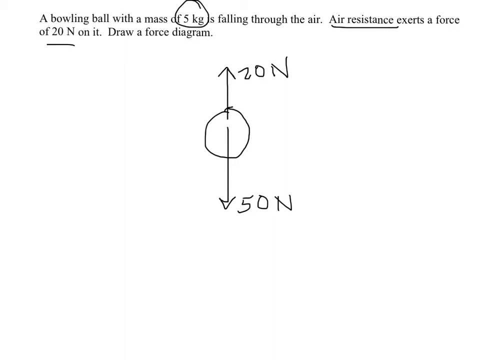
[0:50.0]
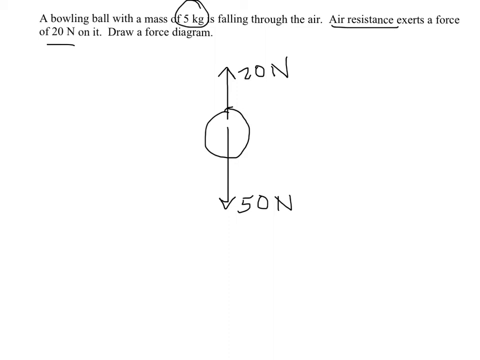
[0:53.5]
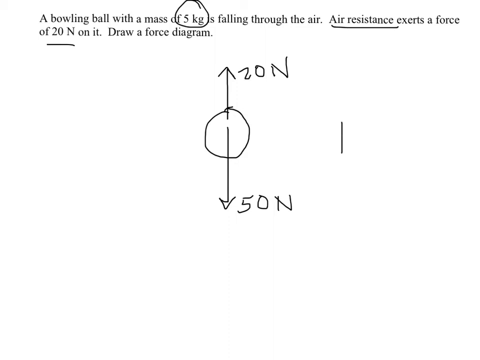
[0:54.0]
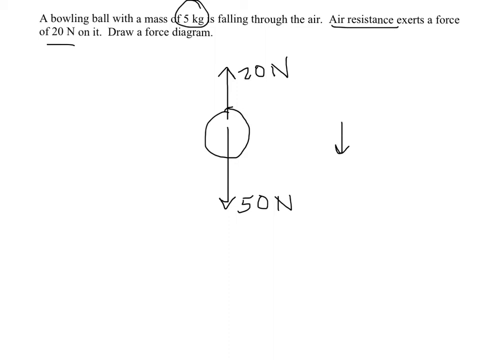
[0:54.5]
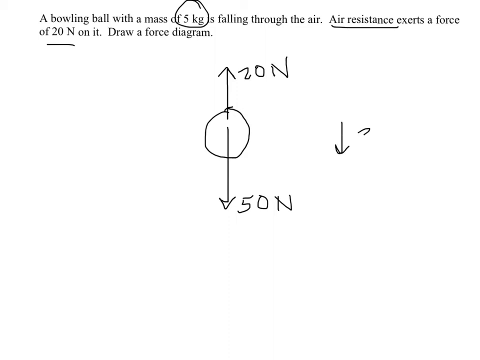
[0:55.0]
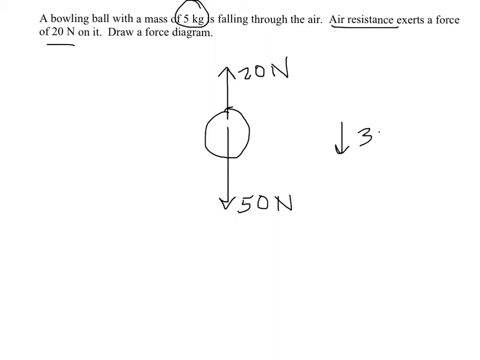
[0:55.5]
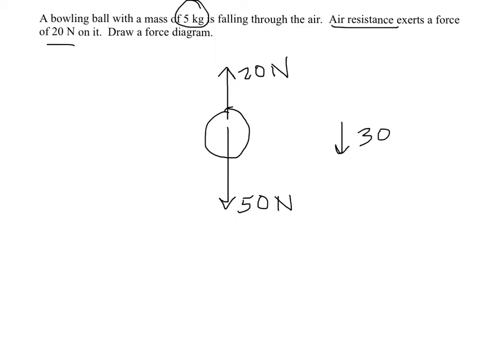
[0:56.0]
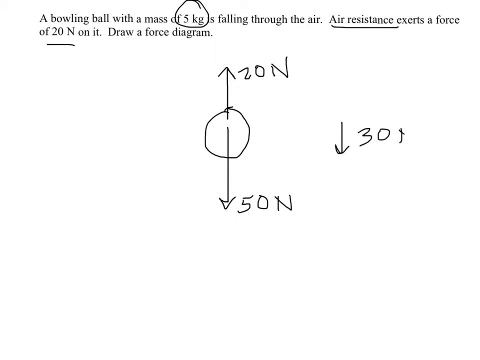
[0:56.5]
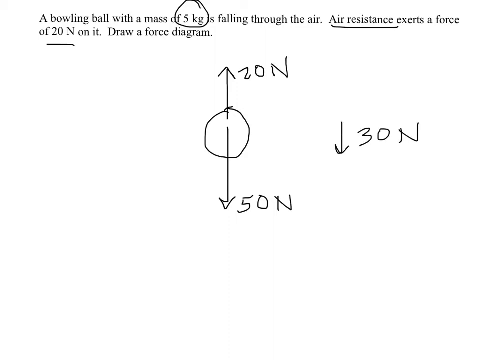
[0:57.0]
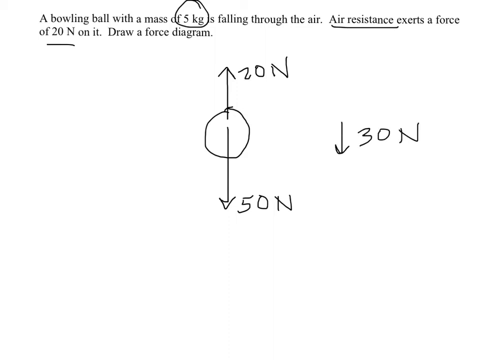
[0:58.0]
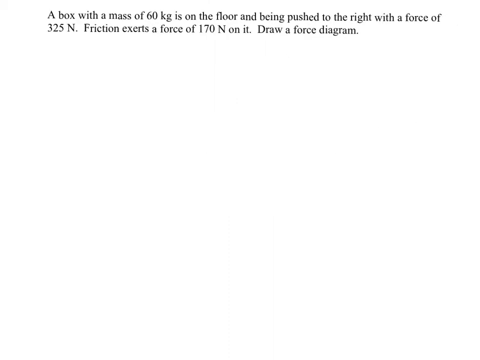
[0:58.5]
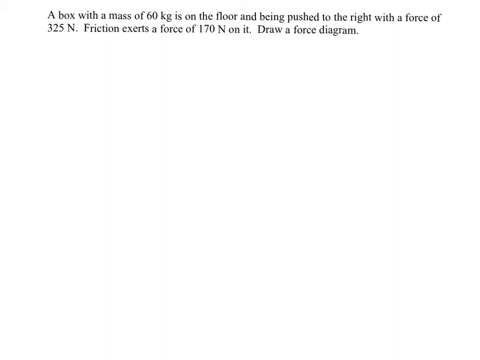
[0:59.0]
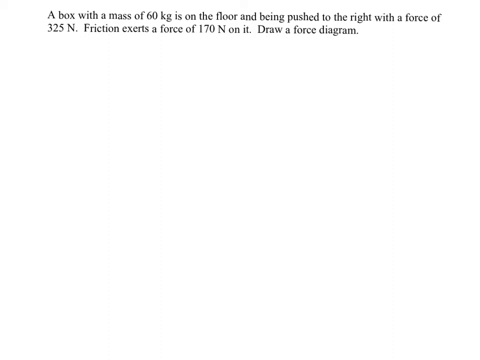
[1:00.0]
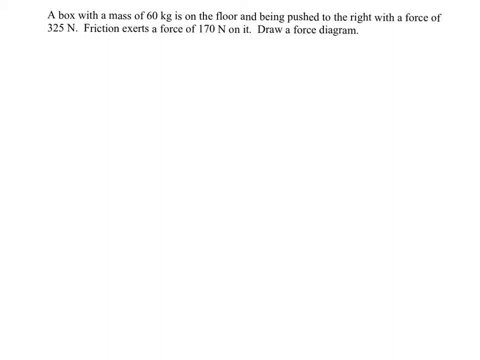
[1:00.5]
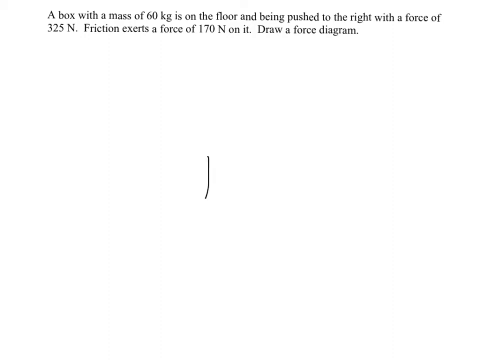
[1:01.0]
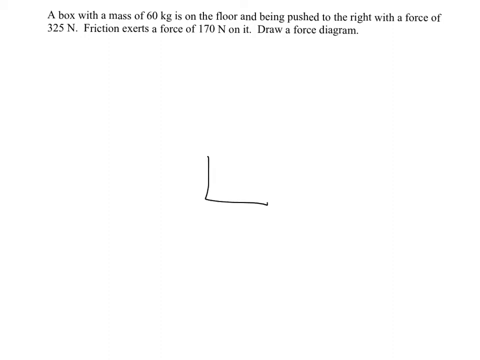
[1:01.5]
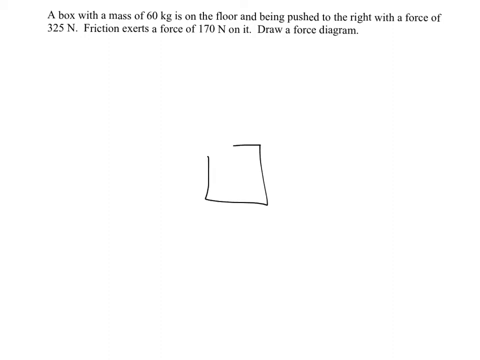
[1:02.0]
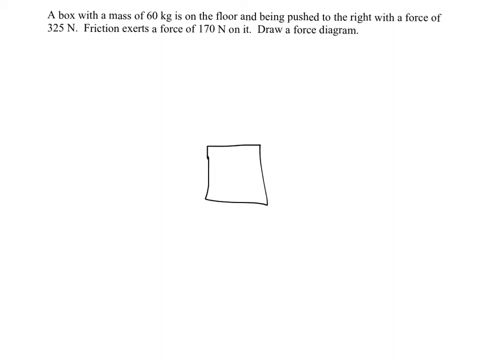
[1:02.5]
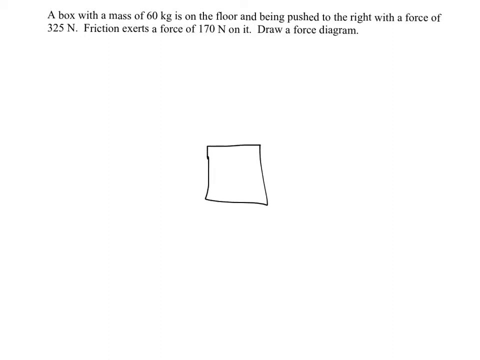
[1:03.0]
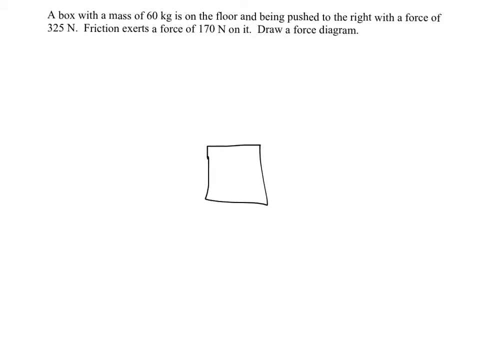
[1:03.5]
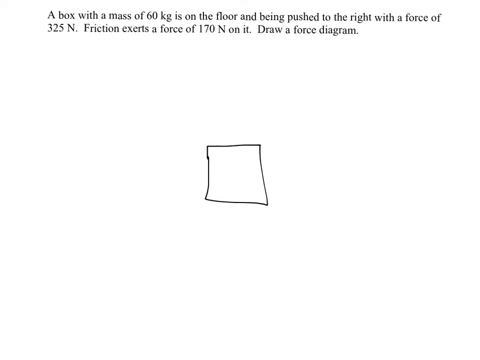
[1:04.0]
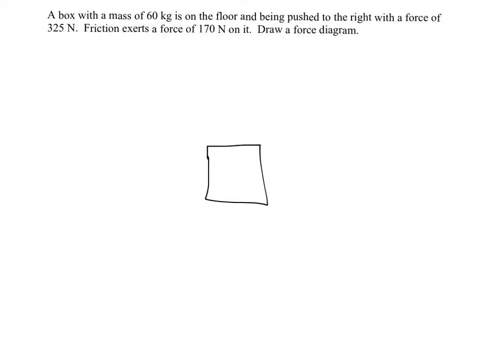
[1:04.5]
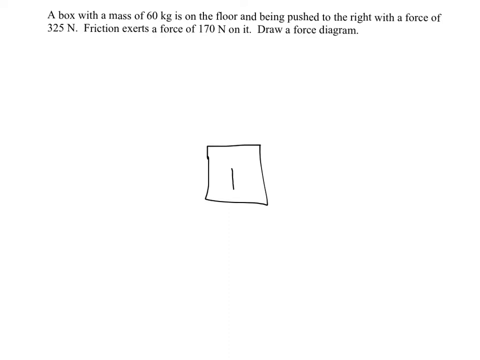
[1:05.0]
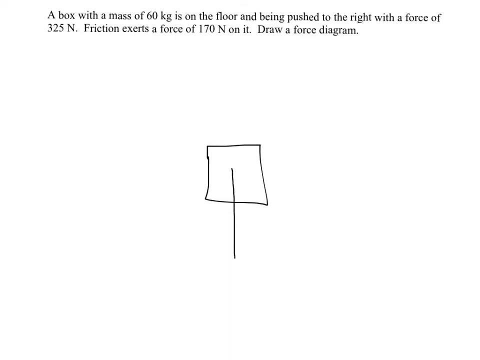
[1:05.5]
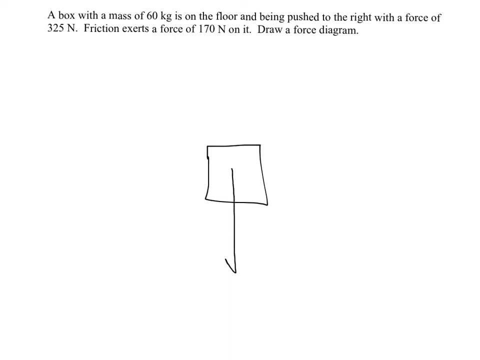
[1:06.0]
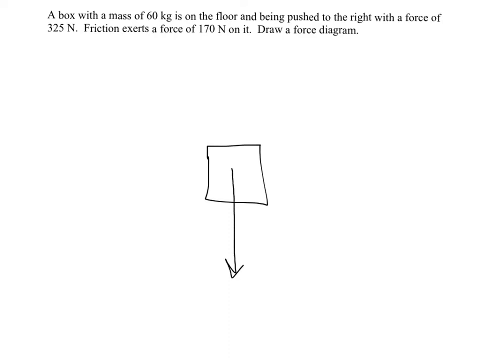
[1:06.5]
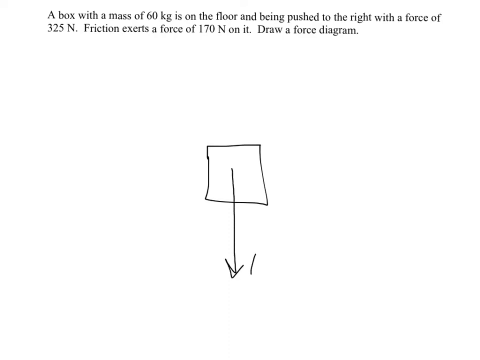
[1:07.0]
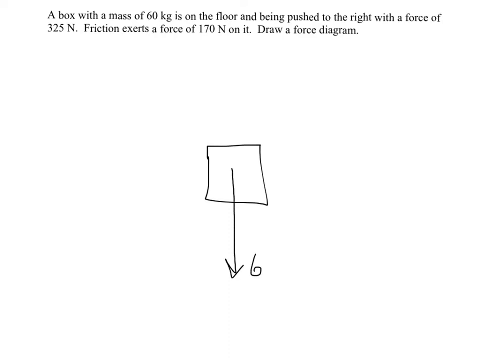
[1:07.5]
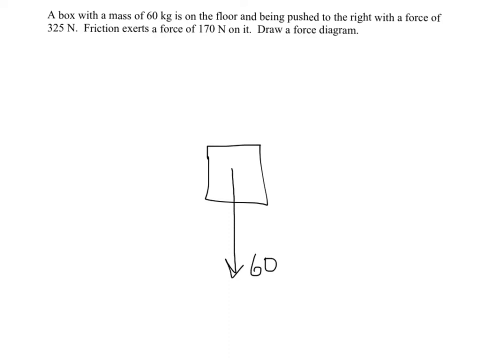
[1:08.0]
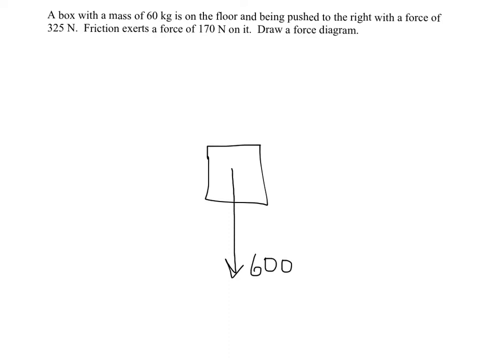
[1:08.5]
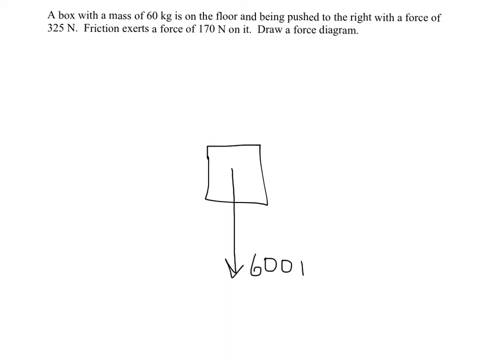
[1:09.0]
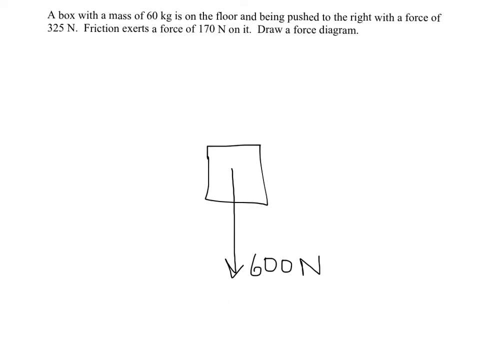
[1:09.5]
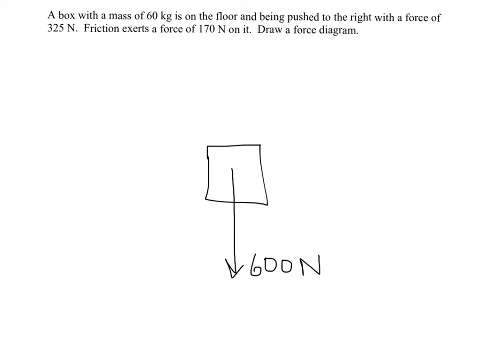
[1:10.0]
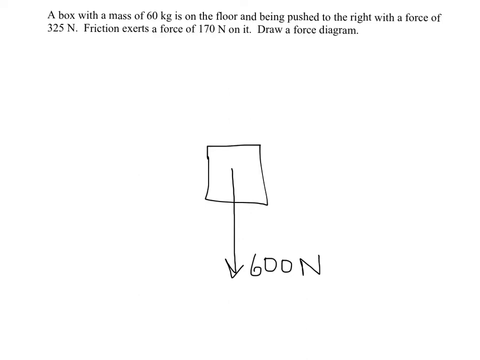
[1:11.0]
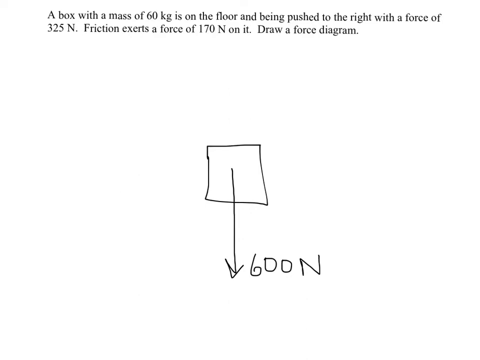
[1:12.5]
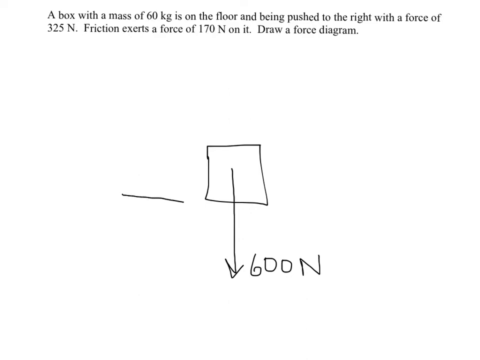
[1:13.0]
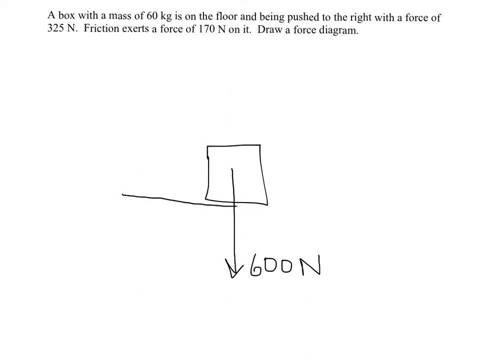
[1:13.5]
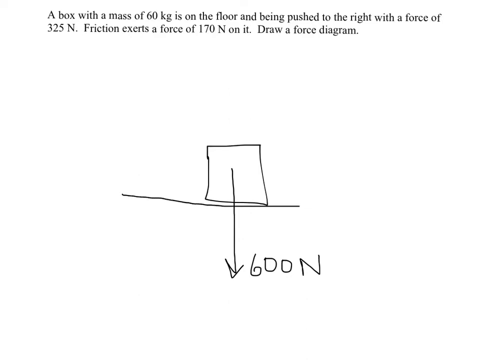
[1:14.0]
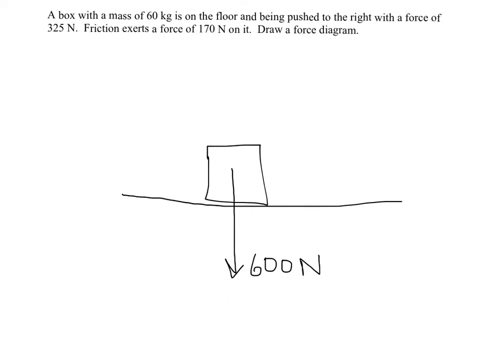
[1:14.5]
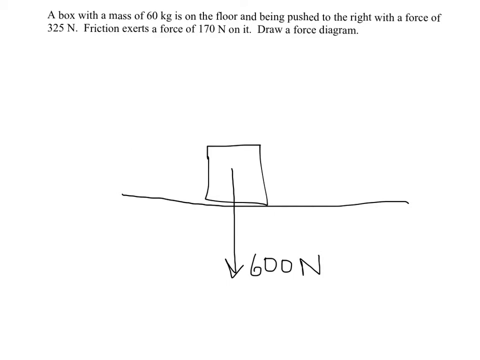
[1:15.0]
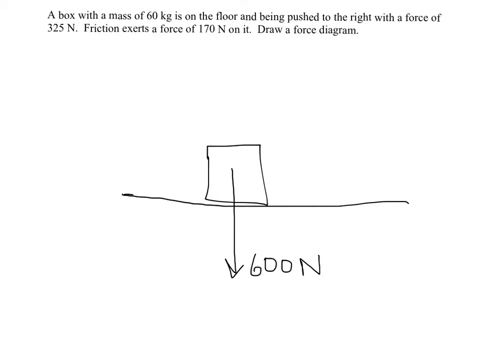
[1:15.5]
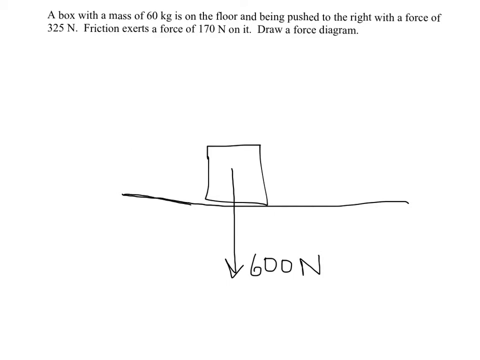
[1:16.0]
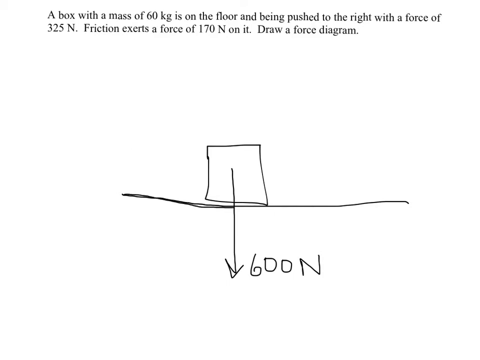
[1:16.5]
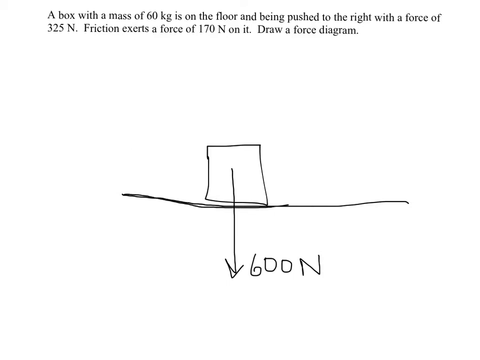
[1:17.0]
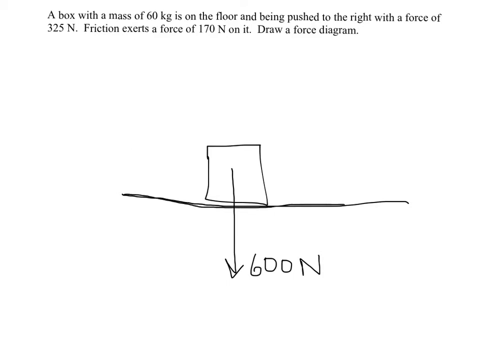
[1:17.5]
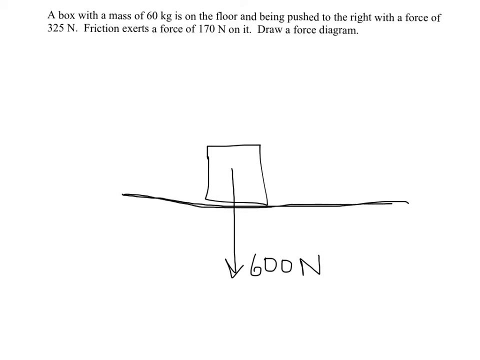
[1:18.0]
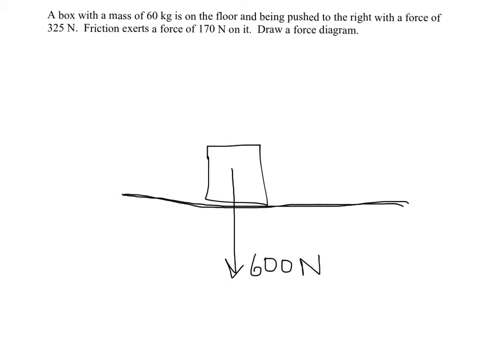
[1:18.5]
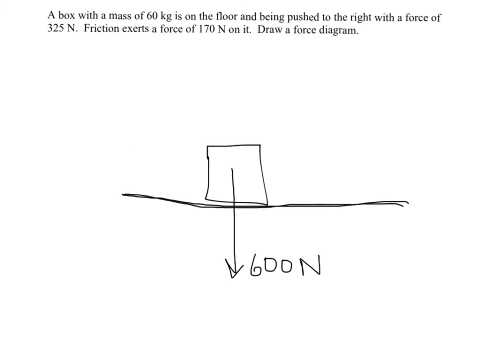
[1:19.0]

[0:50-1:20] Beside the sketch with its 20 N upward and 50 N downward arrows, the person draws another arrow pointing downwards, labeled "30N". He then deletes the sketch and draws a rectangle-like figure. On that figure he draws an arrow pointing downwards labeled with a force of "600N", then draws a line between the arrow and the figure, and another line between the arrow and the figure.